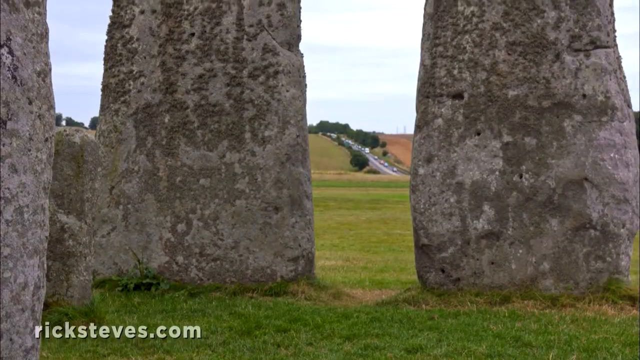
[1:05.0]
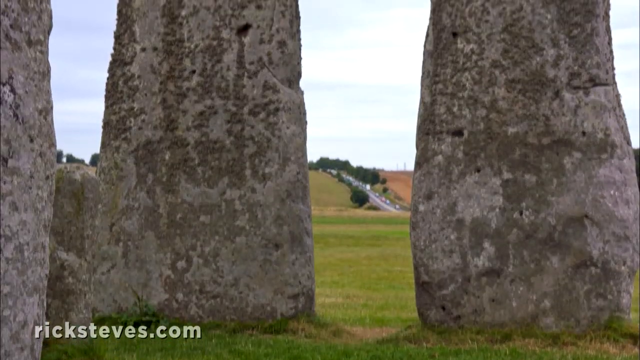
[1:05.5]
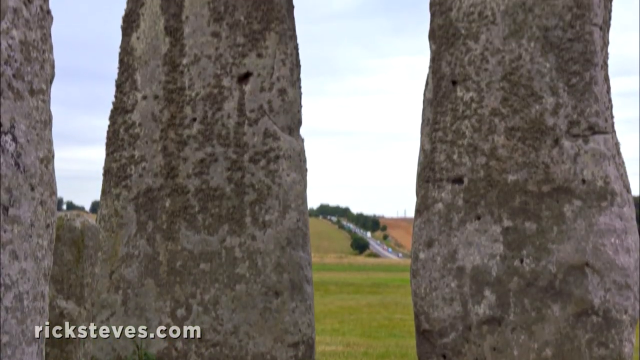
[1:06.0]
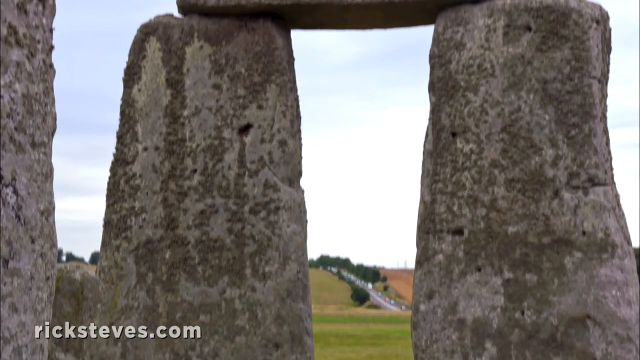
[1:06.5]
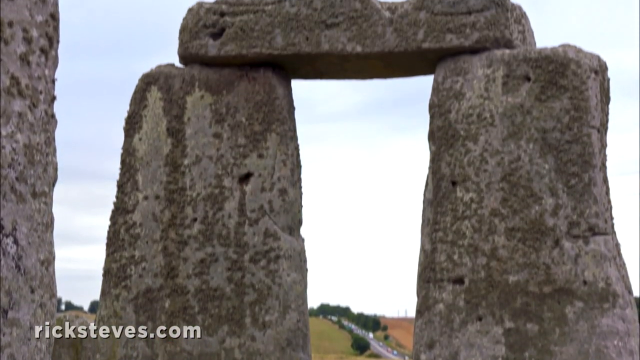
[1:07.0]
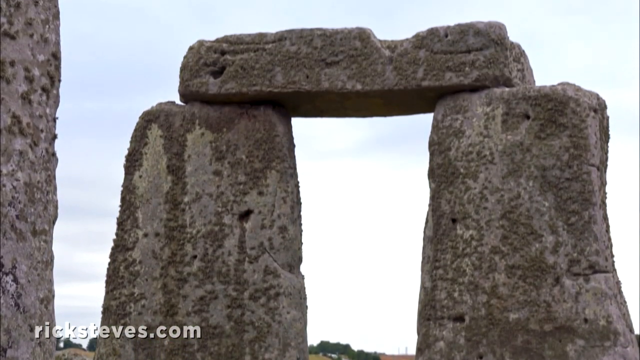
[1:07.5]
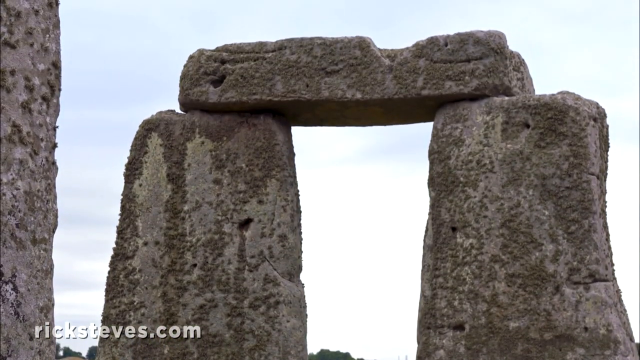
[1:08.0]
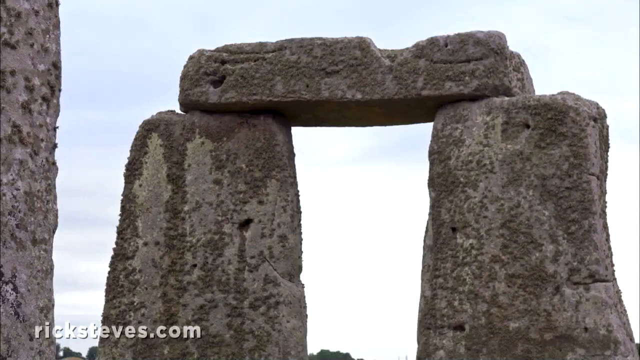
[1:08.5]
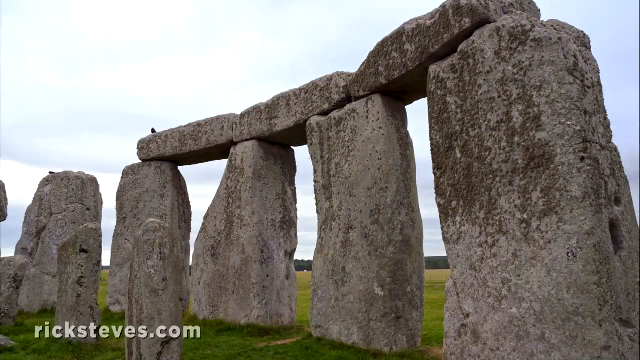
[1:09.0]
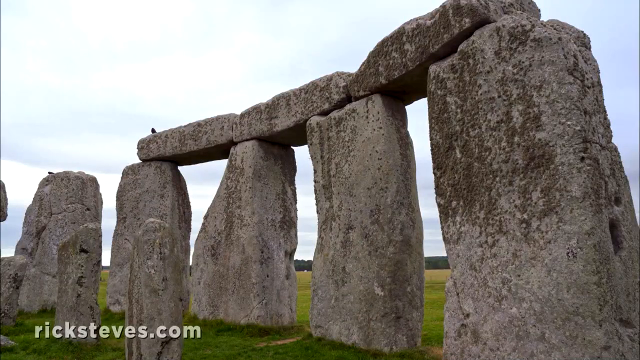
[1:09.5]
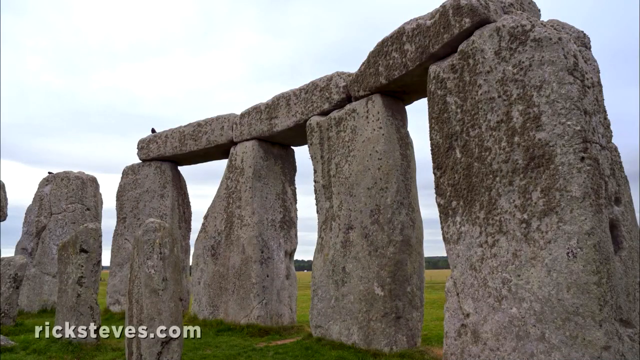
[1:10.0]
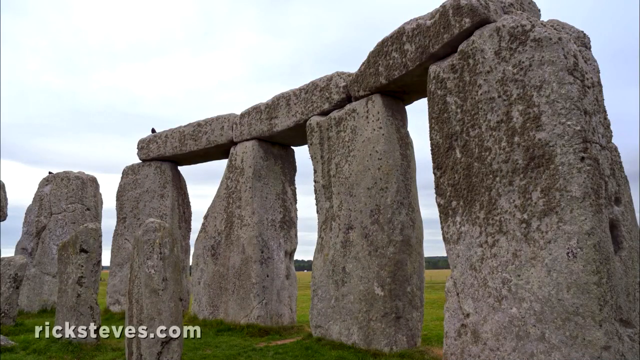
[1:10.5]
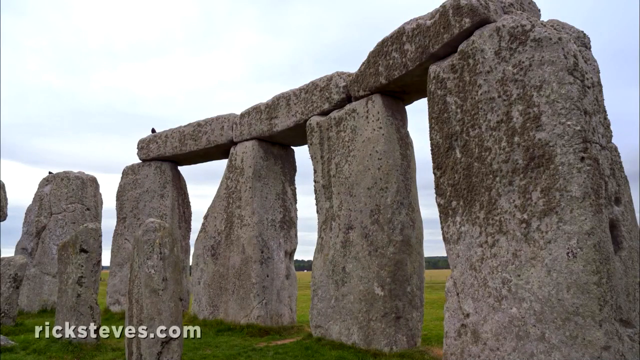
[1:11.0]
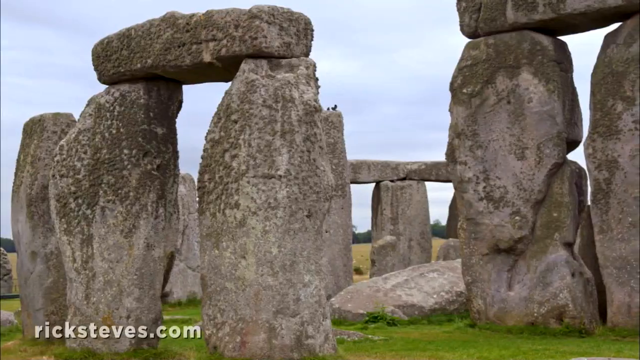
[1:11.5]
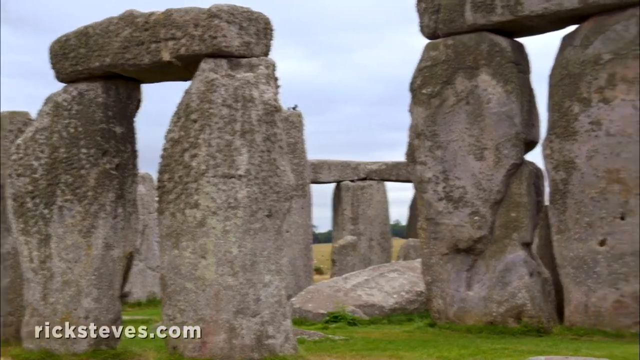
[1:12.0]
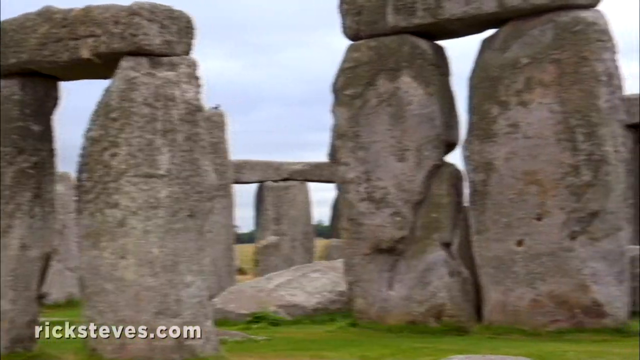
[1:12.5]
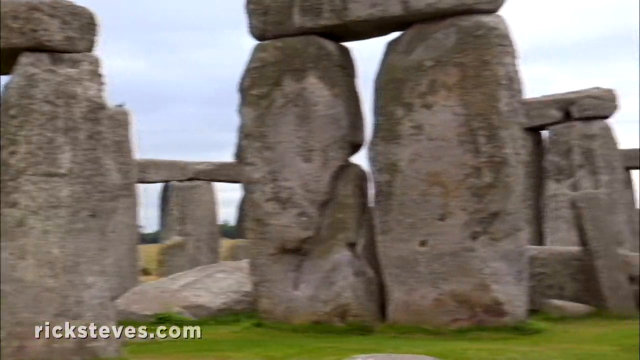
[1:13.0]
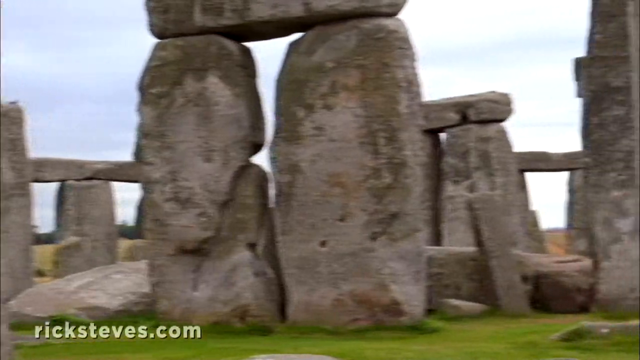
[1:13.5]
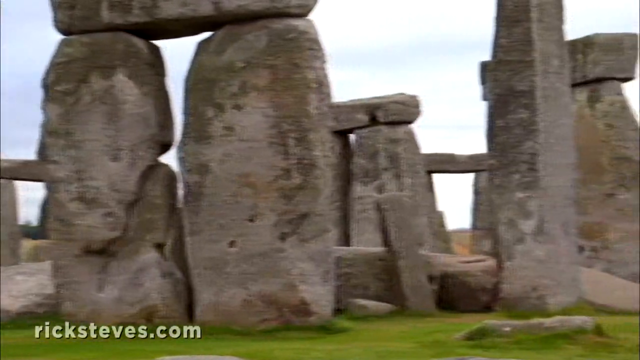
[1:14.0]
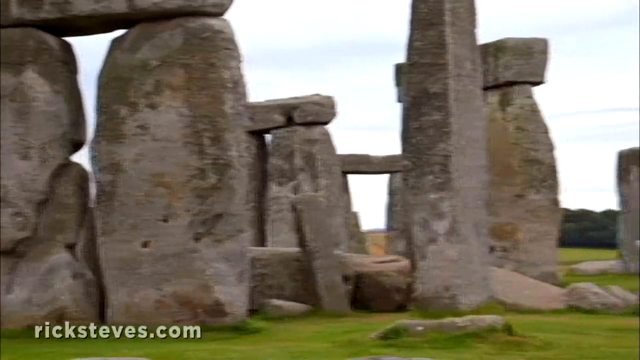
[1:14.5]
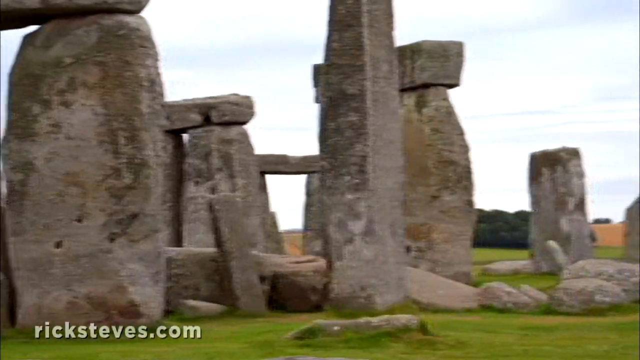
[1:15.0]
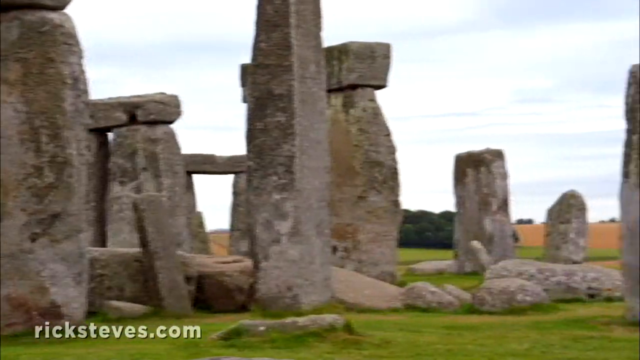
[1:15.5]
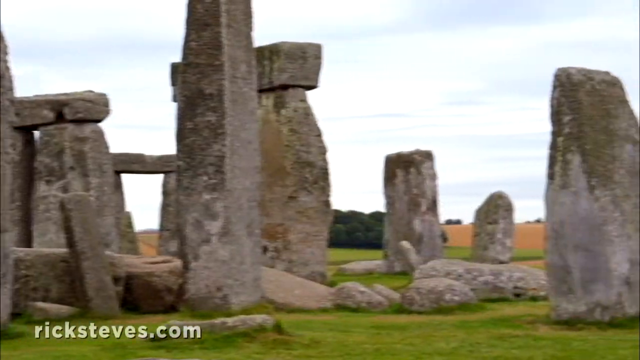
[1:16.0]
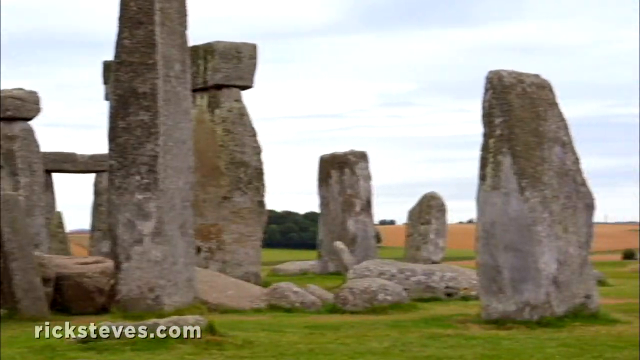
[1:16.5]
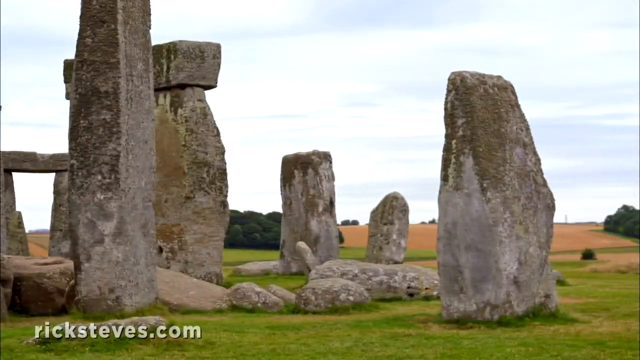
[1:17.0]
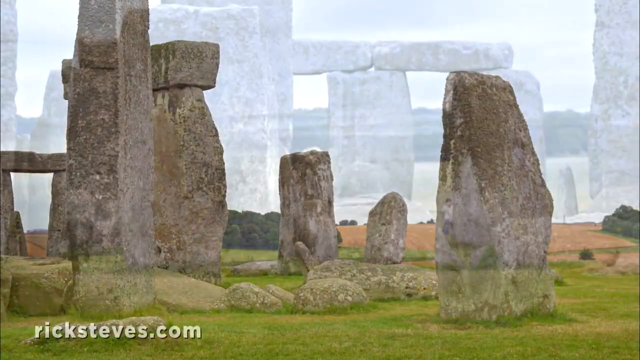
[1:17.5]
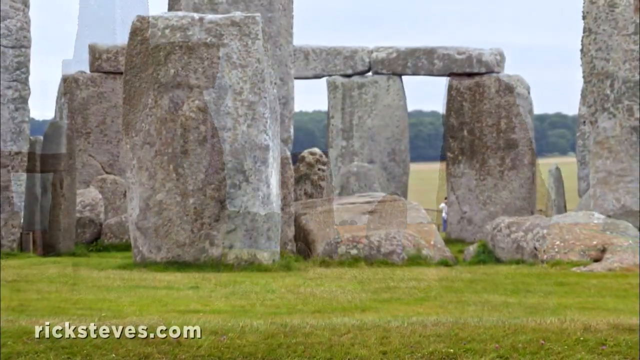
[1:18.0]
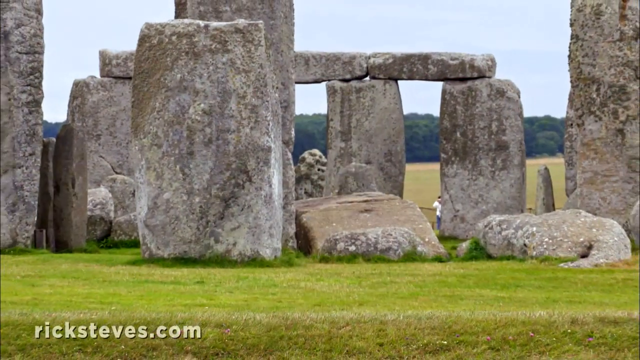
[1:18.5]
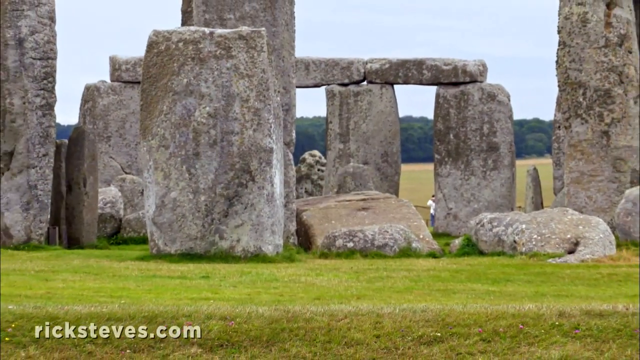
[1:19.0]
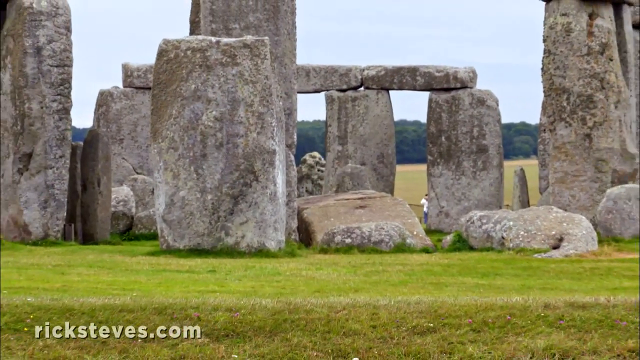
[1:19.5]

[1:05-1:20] The camera scans Stonehenge from the bottom up, then from left to right, giving a full view of the monument. The stones look very old and ancient, in a muted tan and dark brown mottled color. Green grass below goes on for miles in the landscape, with several trees and shrubs in the background. In the foreground, a road descends down a hill, lined with a lot of trees and landscaping. Many stones are vertical on the ground, many are horizontal, and some stones are stacked upon pillar stones.